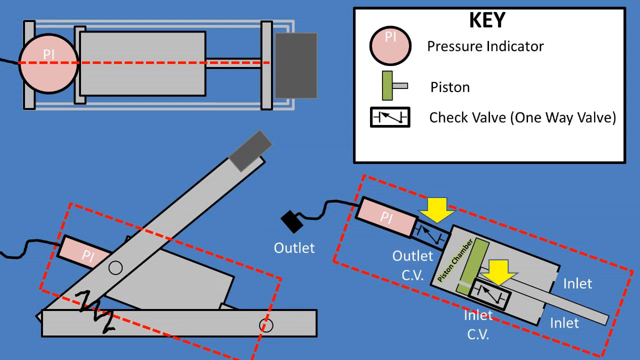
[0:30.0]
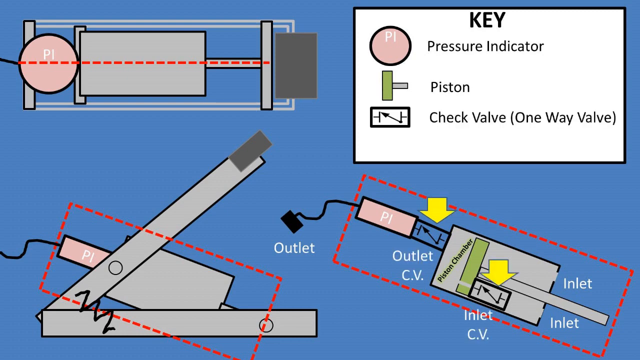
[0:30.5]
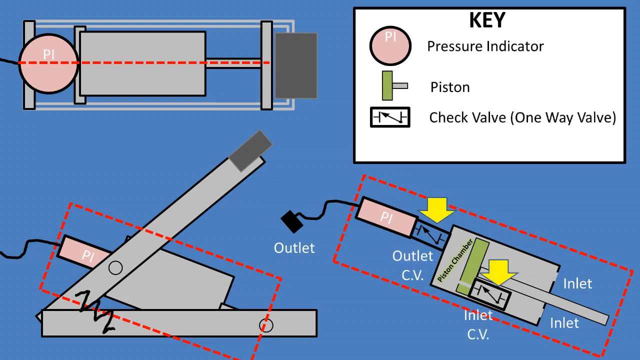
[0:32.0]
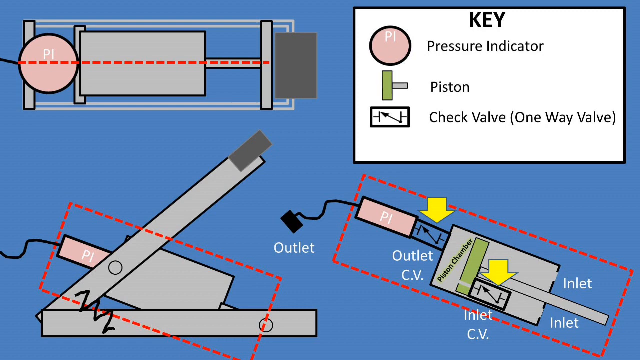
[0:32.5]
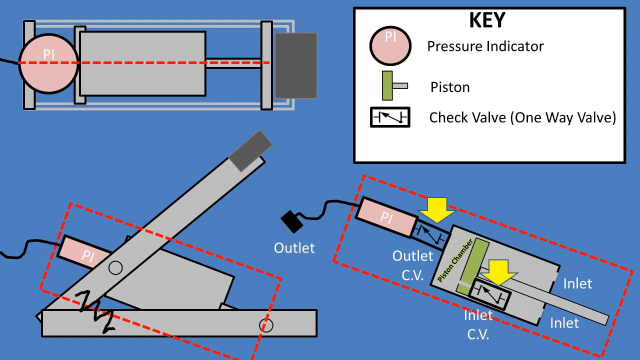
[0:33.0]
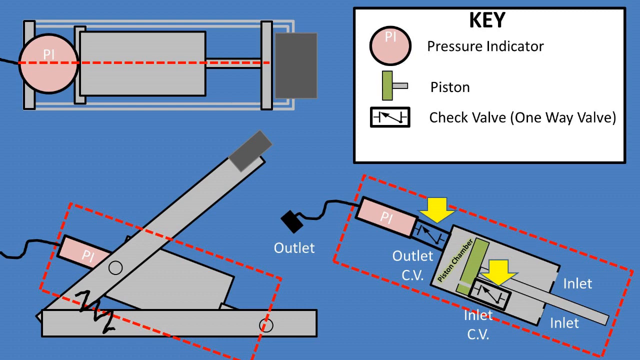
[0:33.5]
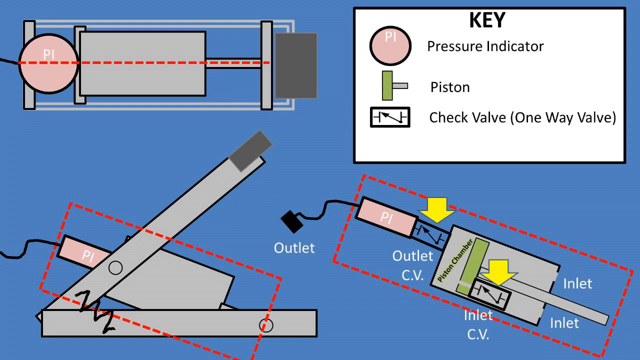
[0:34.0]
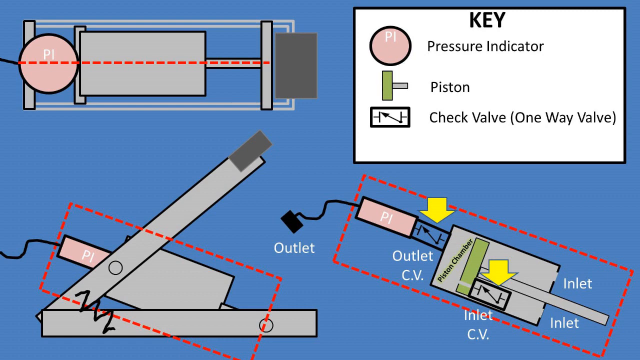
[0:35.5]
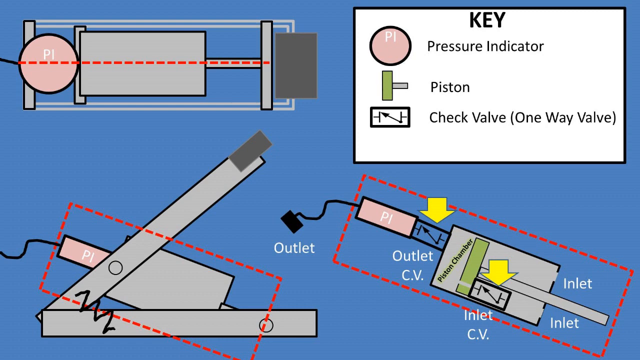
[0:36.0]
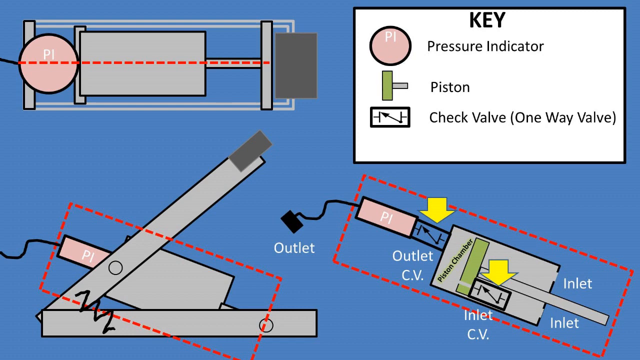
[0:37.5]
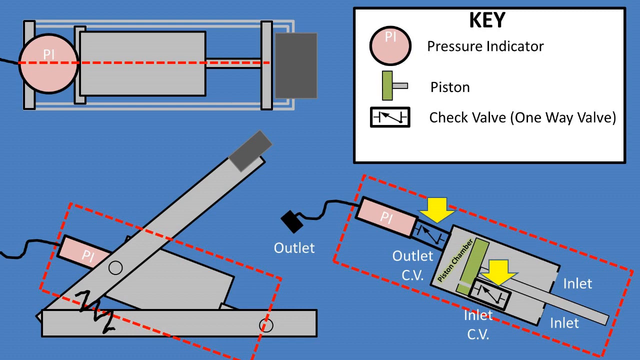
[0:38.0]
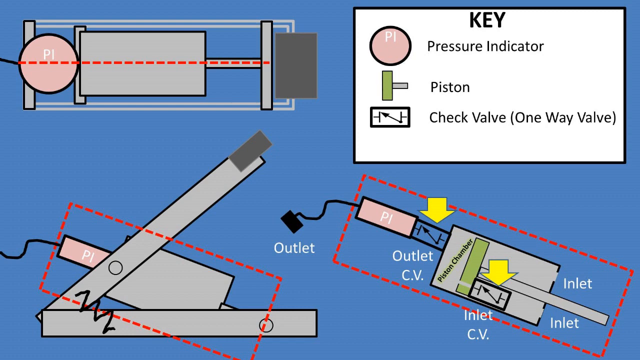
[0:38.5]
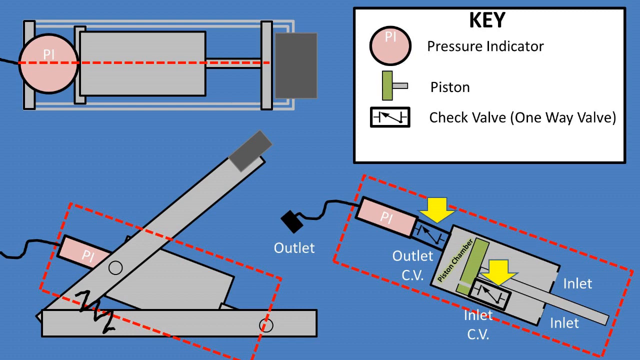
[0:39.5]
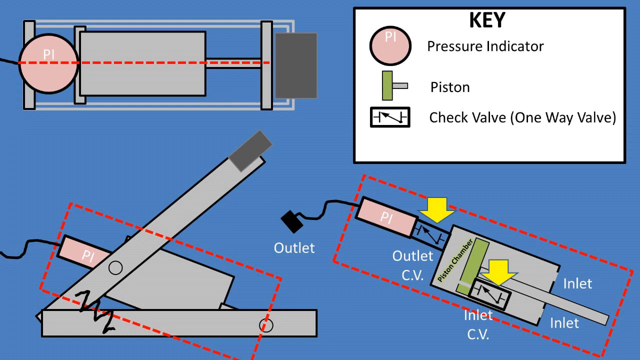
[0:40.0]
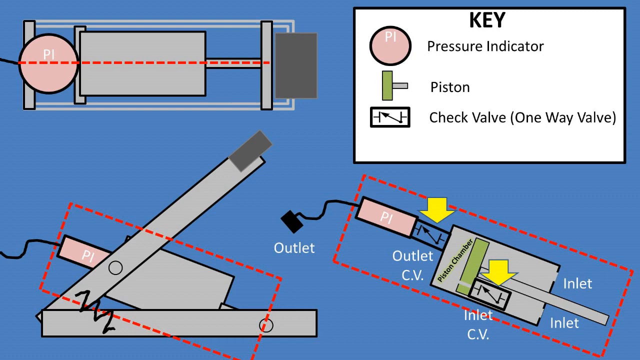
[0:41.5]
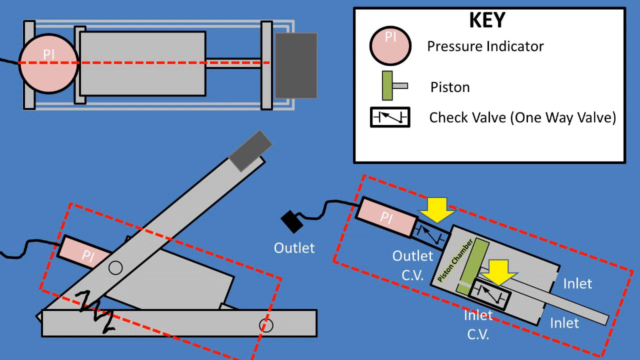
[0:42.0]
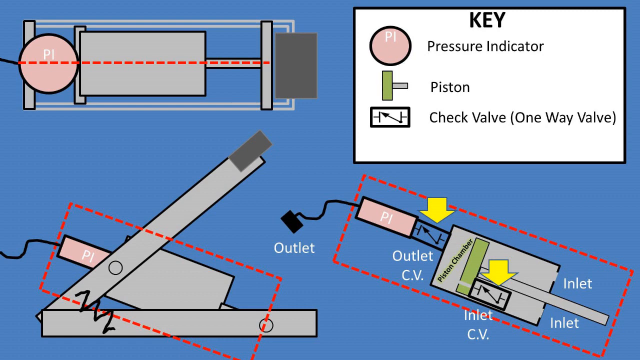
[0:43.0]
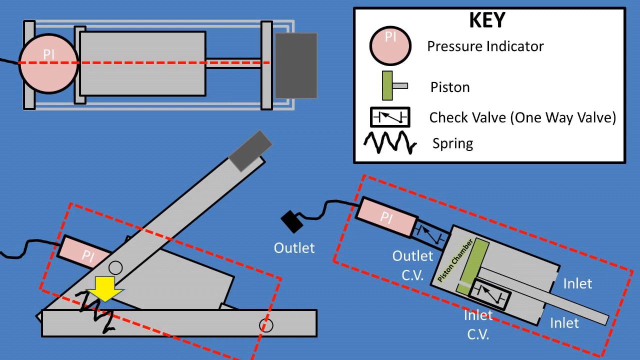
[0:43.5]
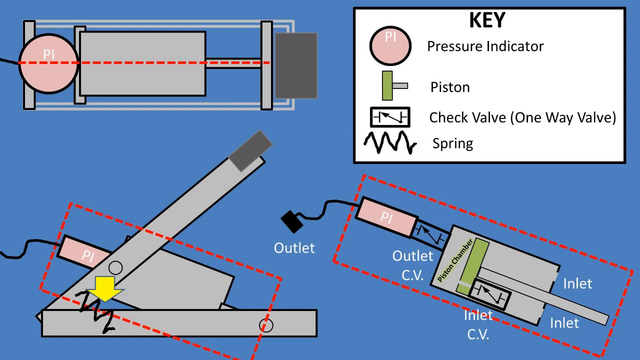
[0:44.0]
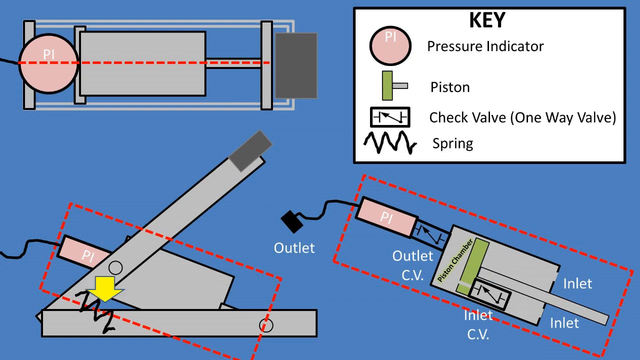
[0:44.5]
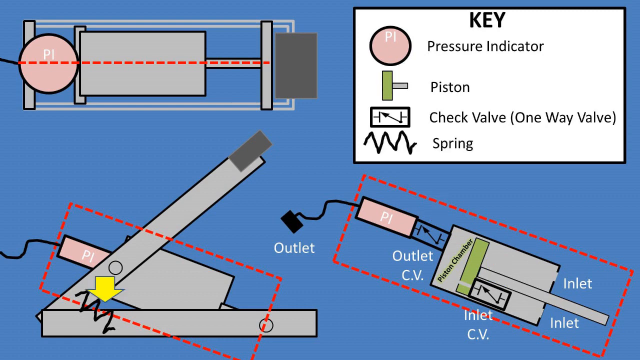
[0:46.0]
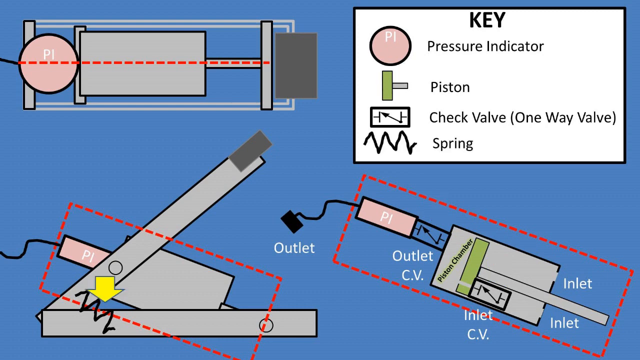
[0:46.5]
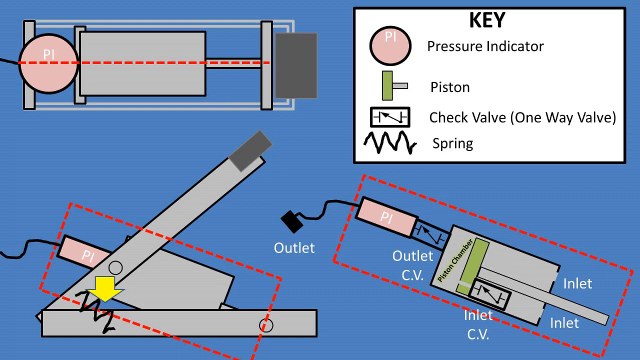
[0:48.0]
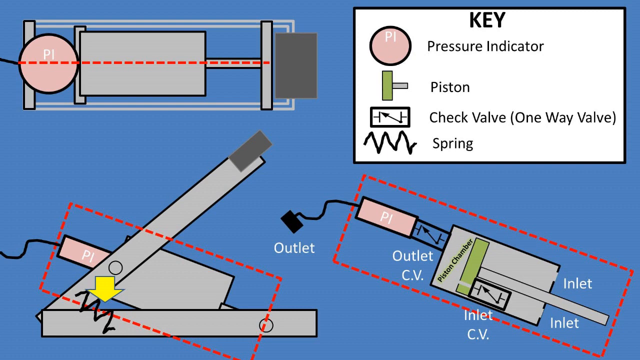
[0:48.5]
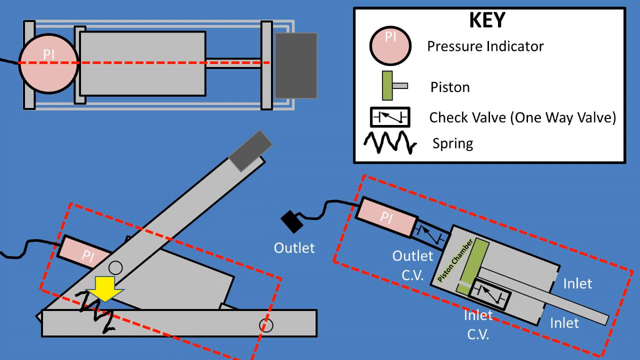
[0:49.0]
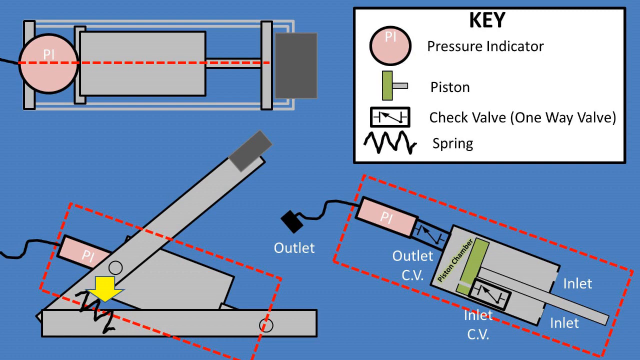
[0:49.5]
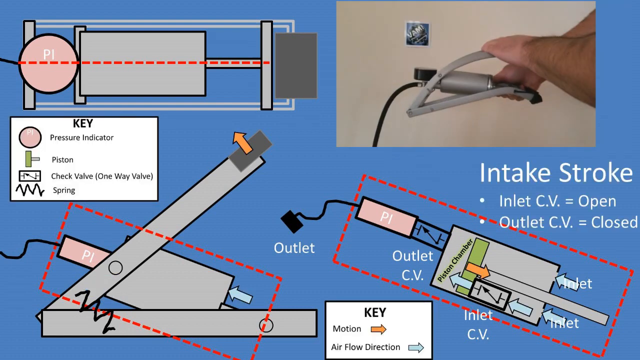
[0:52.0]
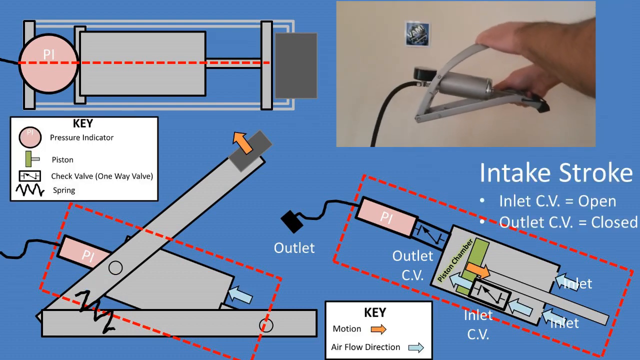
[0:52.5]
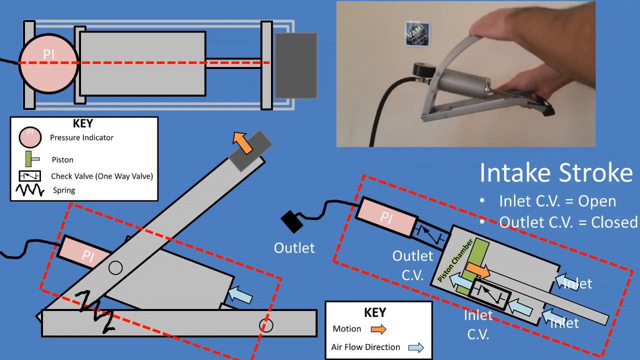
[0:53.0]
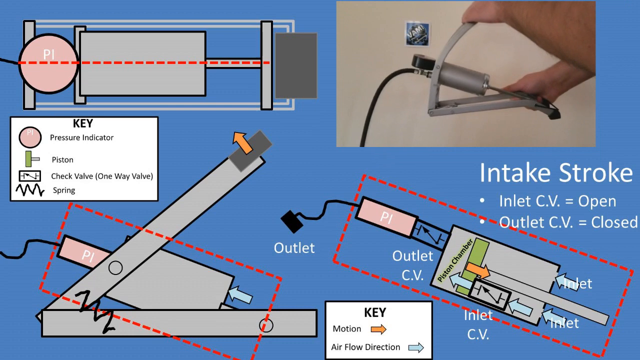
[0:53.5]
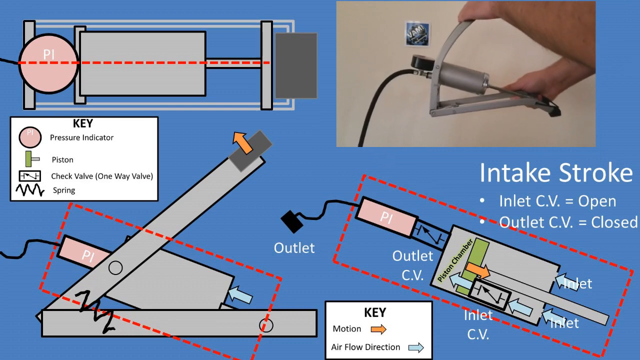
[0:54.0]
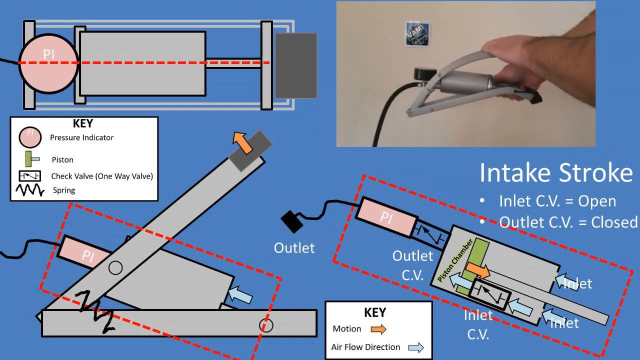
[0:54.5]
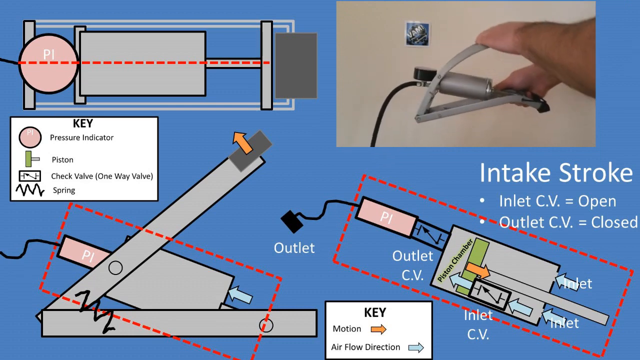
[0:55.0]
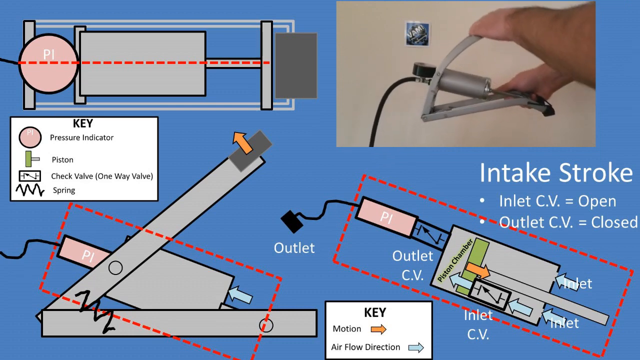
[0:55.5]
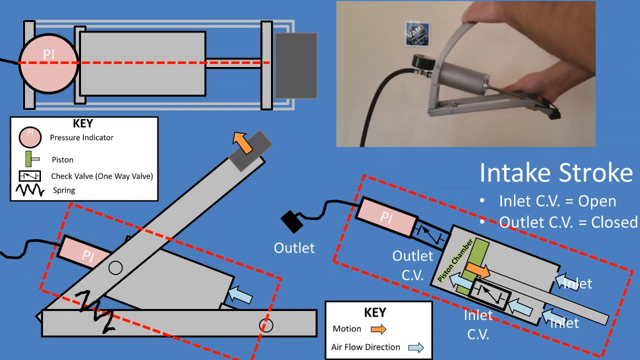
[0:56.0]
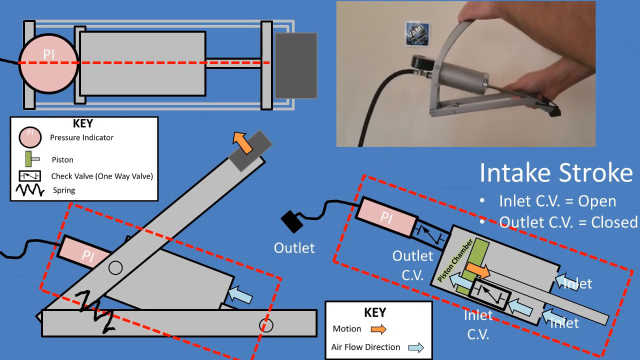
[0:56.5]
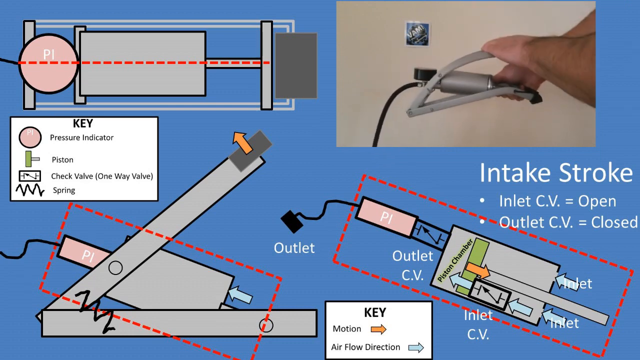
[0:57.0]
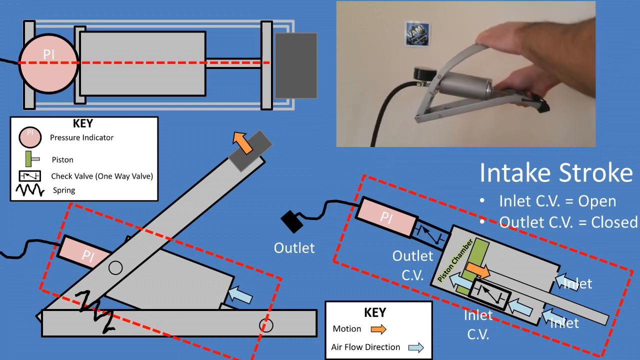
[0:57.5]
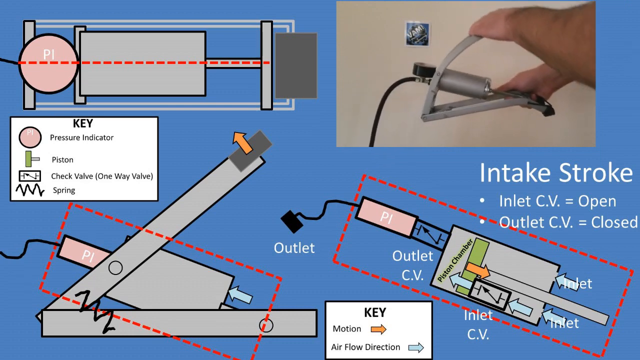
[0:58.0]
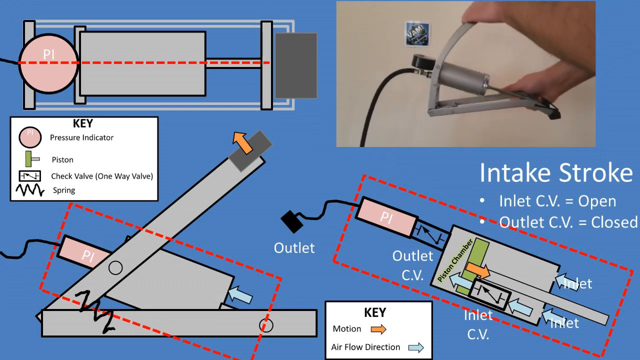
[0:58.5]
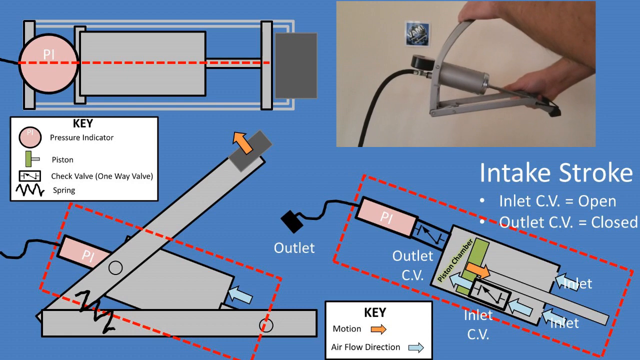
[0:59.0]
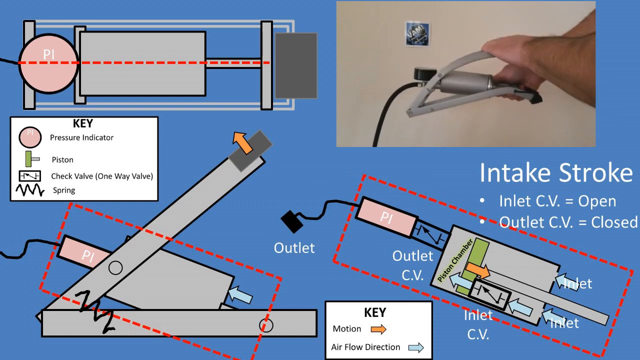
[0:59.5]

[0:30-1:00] The same set of three diagrams is on screen, and in the upper right there is a key identifying three pieces: the pressure indicator, the piston, and the check valve, which is a one-way valve. Two yellow arrows point down at the check valve. Another item pops up under the key: the spring, shown as a squiggly line that kind of goes up and down. The spring is then marked on the lower left diagram with another yellow arrow; the squiggly line is in the lower left of that diagram, connecting the two major long, flat, gray pieces of the device. The video of a person pressing the two levers together plays again, and text on the screen reads "Intake stroke, inlet CV equals open, outlet CV equals closed."